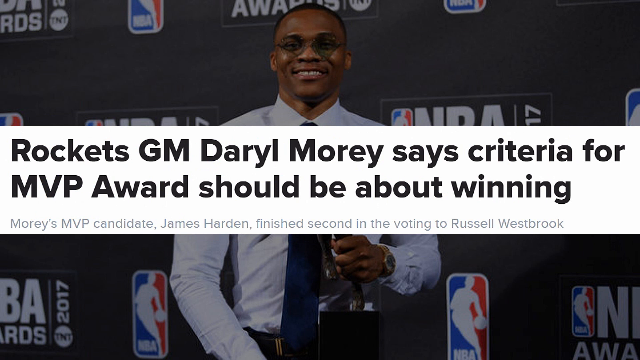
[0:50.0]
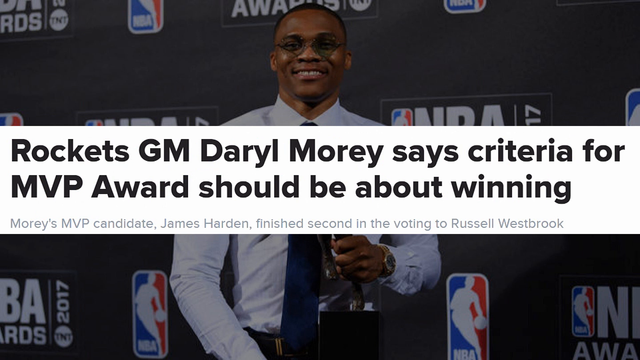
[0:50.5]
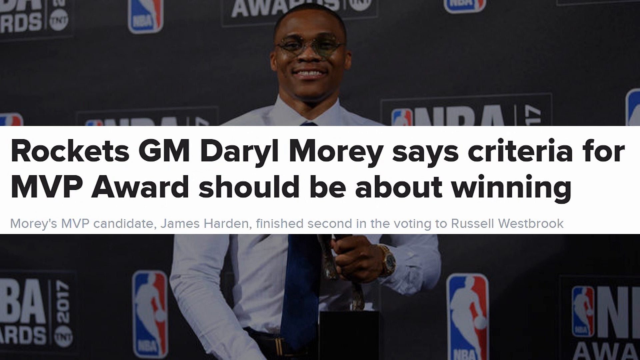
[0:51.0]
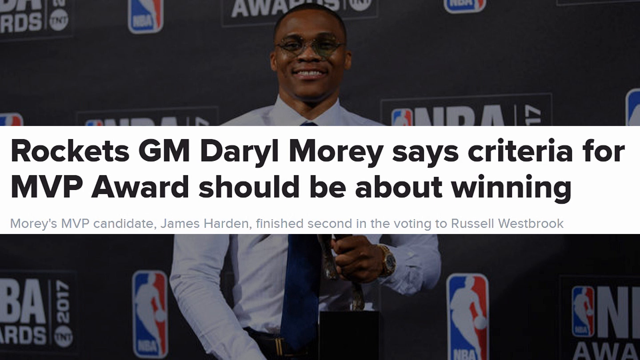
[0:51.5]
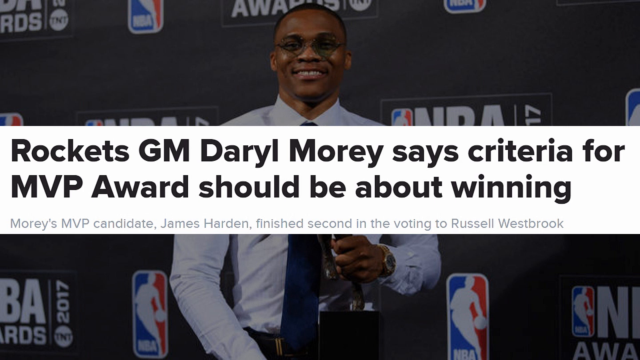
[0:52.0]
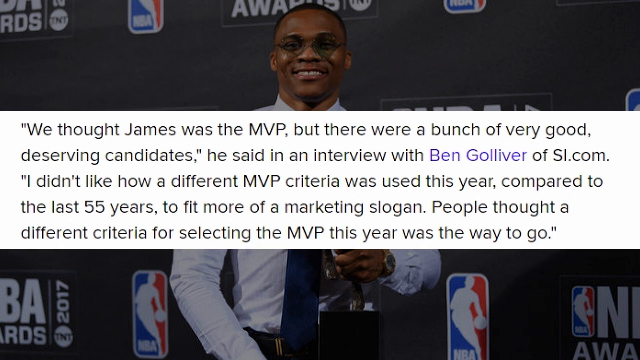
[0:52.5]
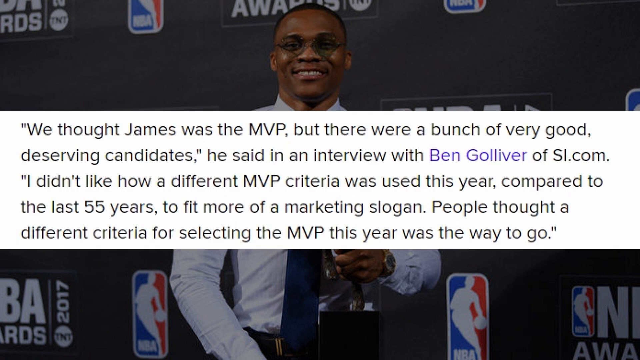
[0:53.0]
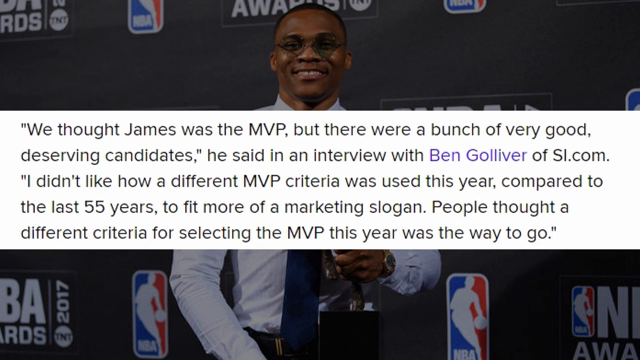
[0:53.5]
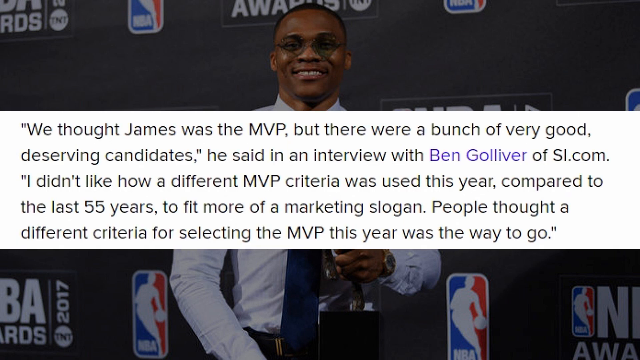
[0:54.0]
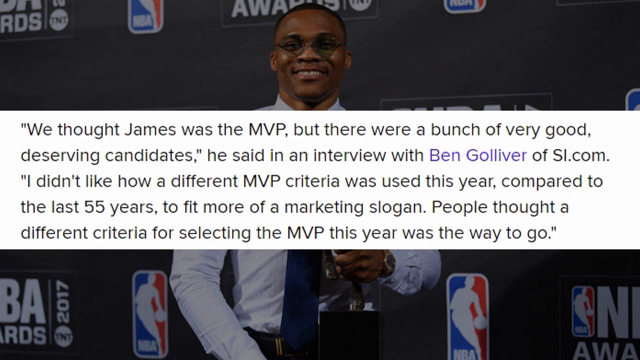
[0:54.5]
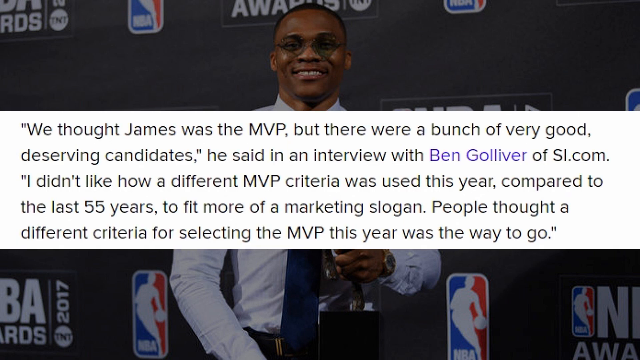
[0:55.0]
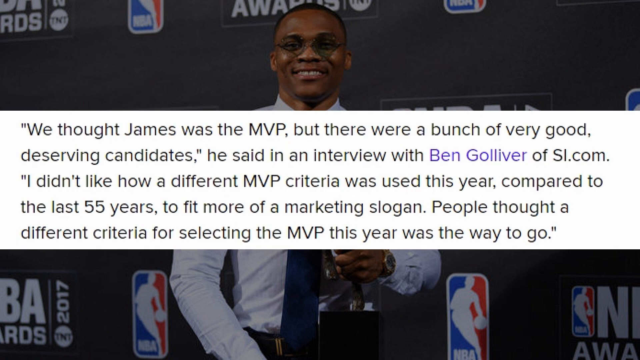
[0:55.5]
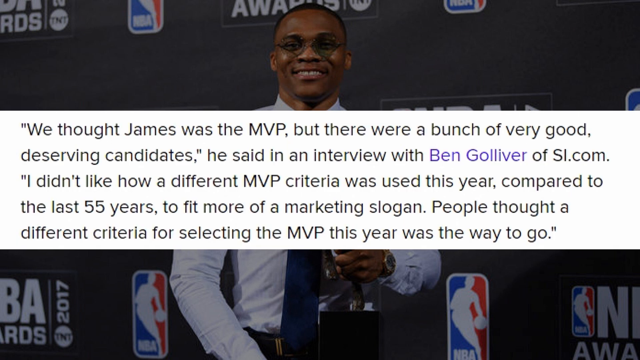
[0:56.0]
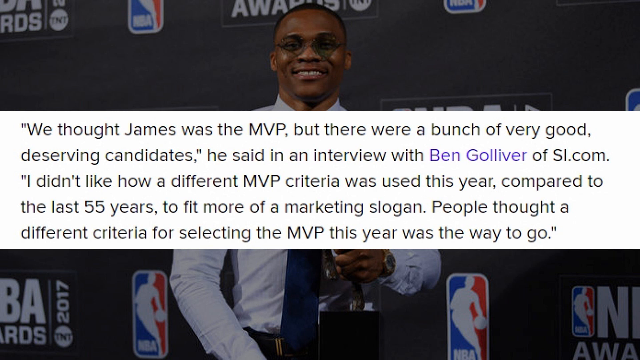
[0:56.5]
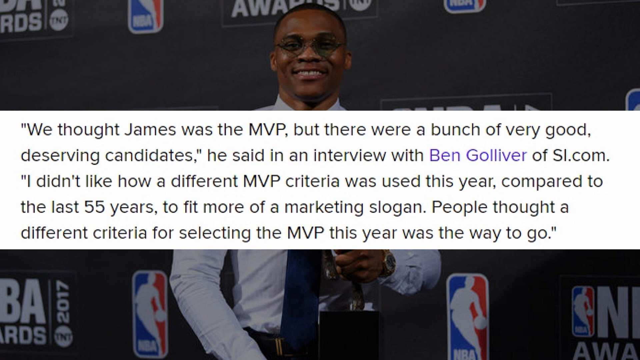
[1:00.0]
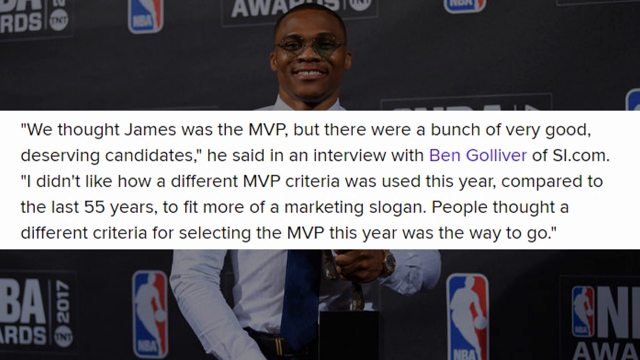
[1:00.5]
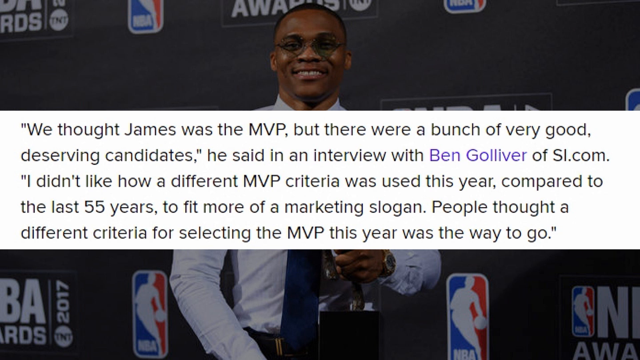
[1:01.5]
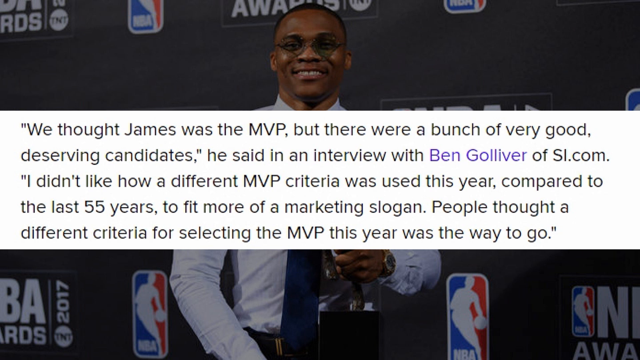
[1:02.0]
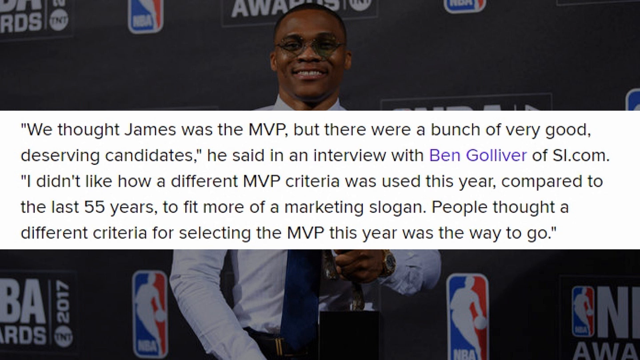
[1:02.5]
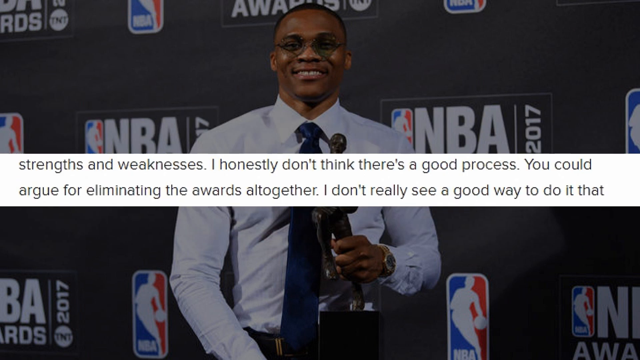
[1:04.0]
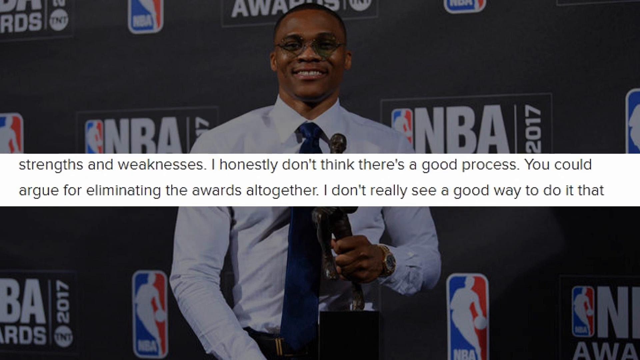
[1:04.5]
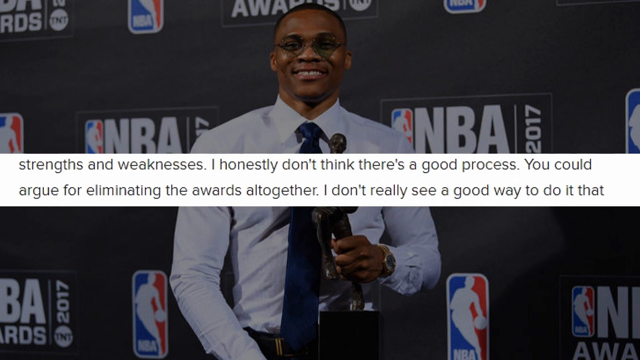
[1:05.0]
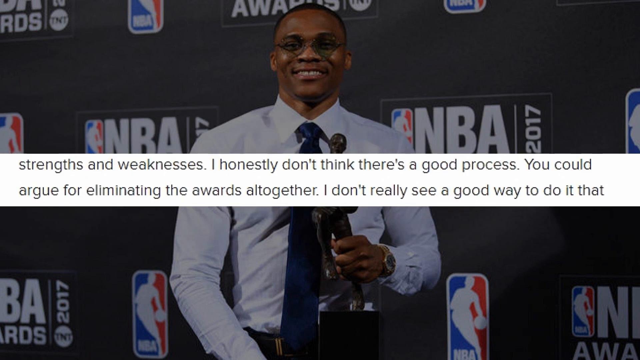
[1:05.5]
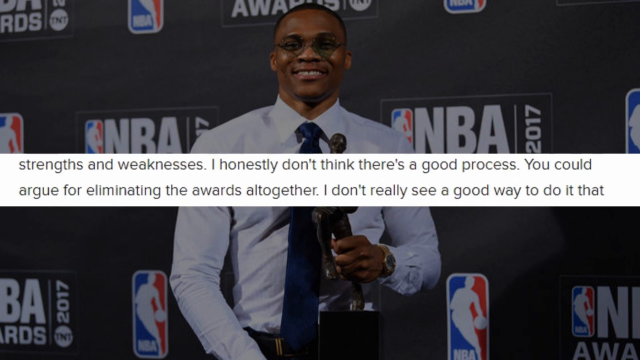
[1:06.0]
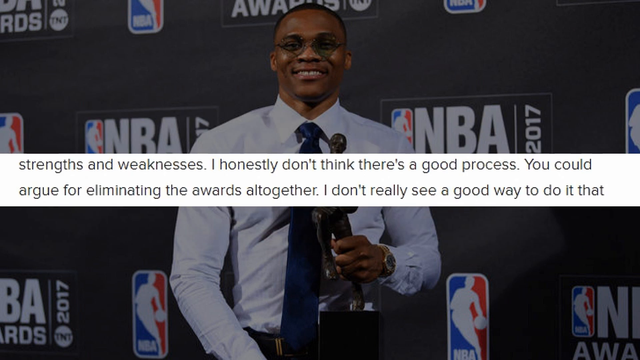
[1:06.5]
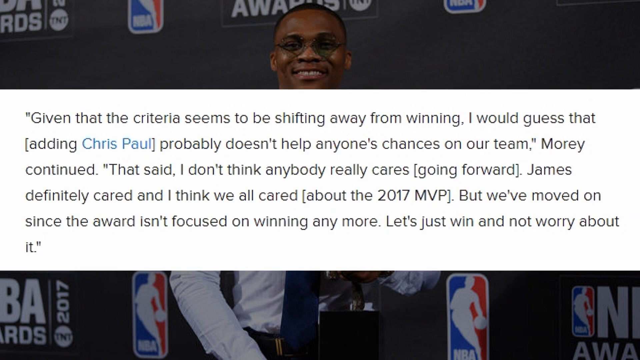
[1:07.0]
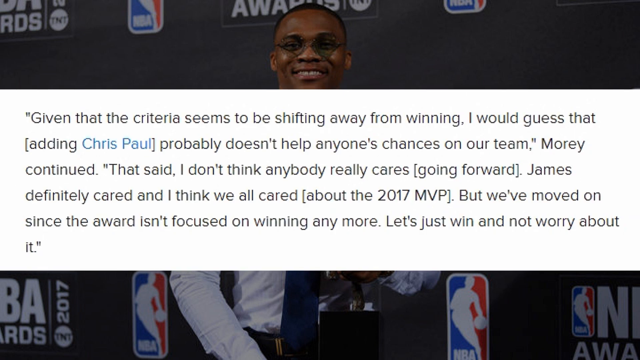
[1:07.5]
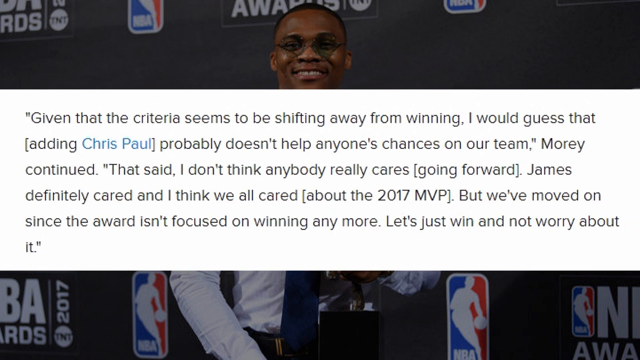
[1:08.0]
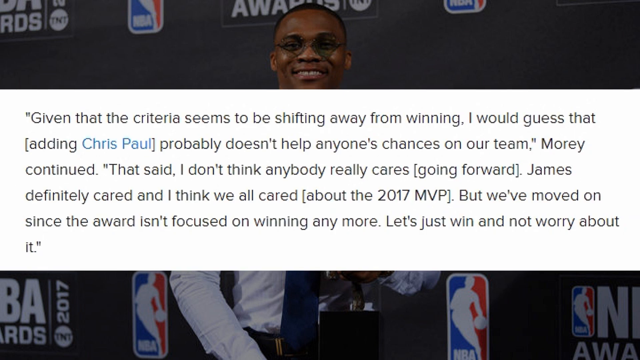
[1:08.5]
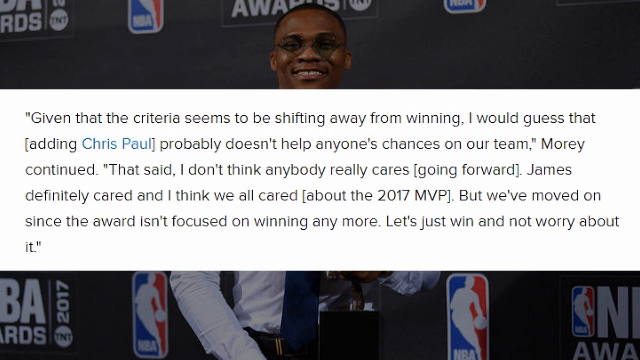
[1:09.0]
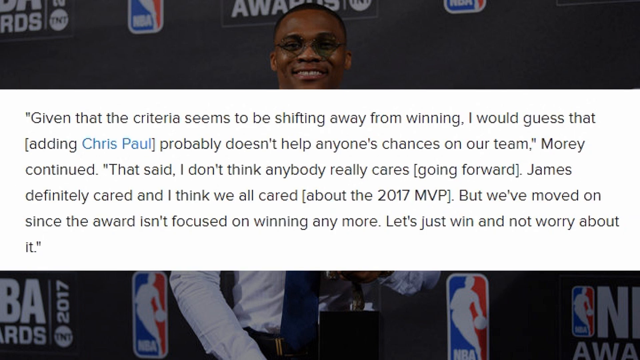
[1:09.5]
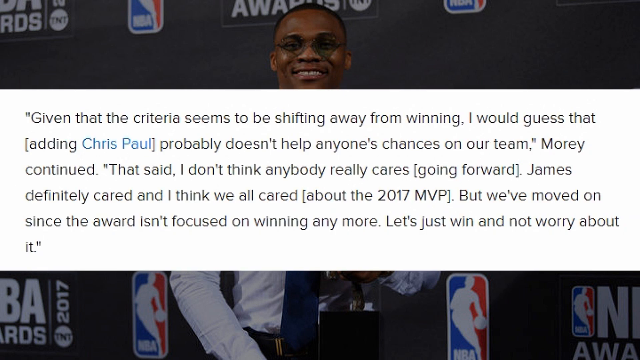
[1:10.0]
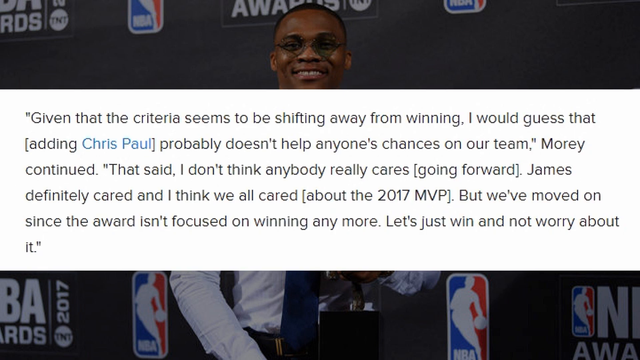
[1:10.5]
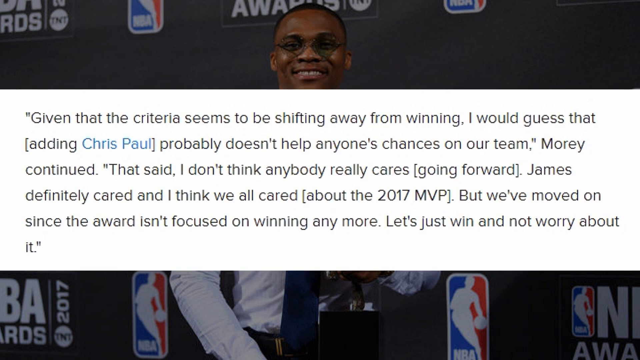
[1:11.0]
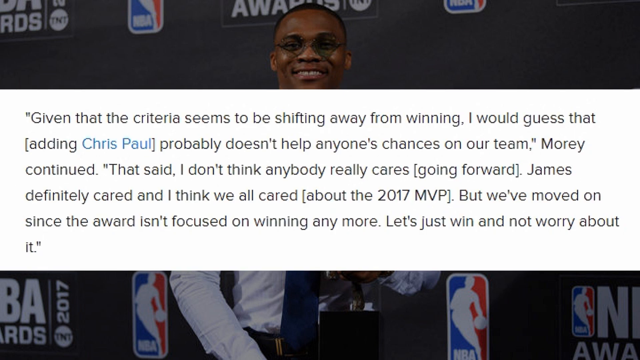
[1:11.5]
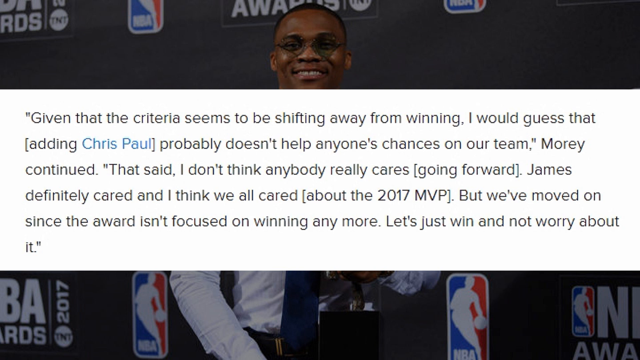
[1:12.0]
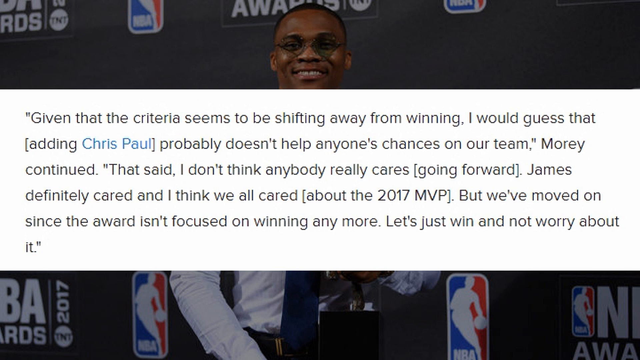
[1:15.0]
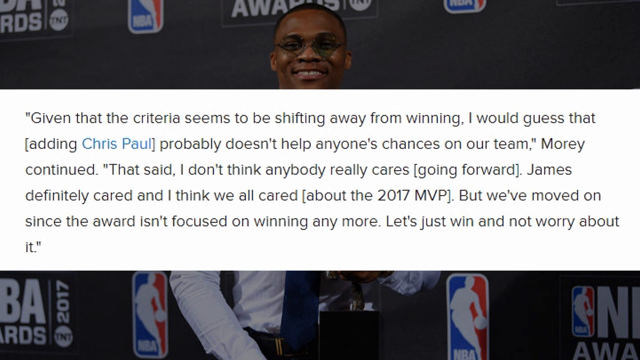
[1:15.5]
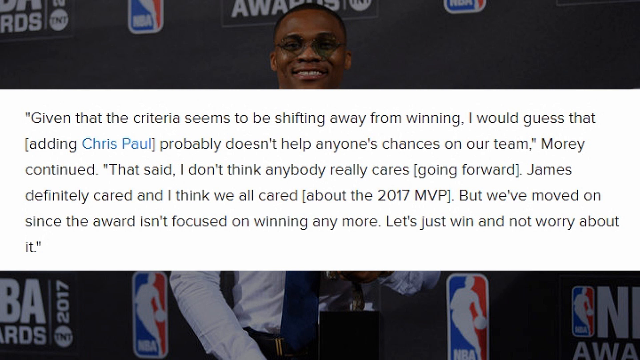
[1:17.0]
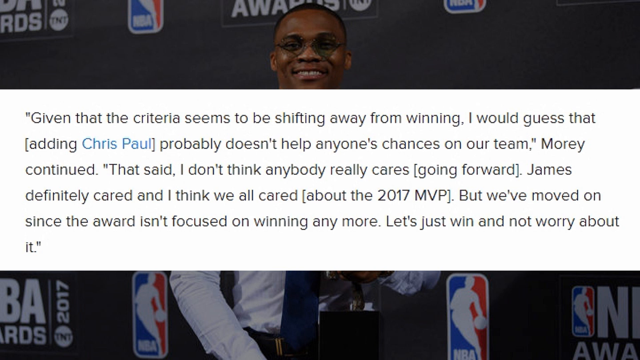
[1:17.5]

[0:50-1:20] Text beginning "Rockets General Manager" appears in black over a white background, which forms a striped overlay on an image of Russell Westbrook holding up the trophy. Westbrook wears a studded tie and glasses and smiles directly at the camera. Behind him are the NBA Awards logo and the words "NBA Awards Access 2017," on a background covered with various sponsorships.